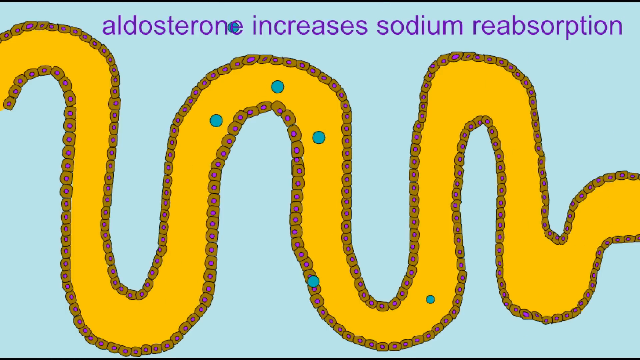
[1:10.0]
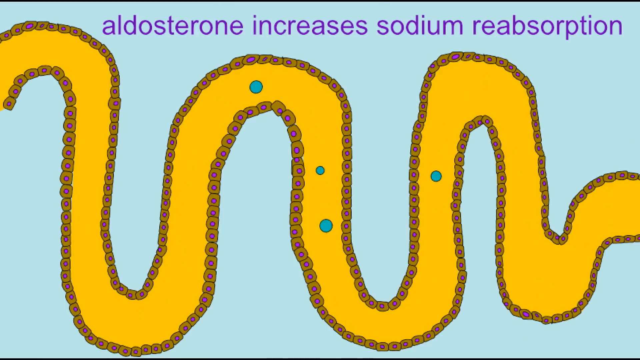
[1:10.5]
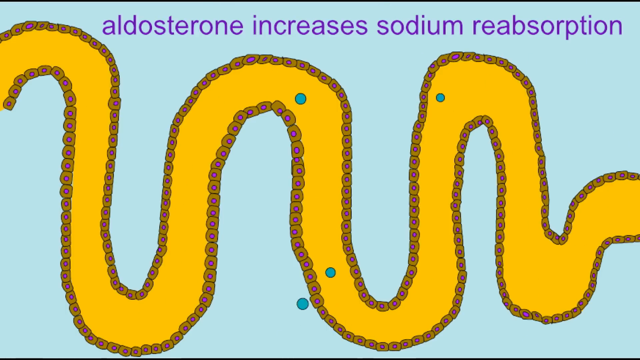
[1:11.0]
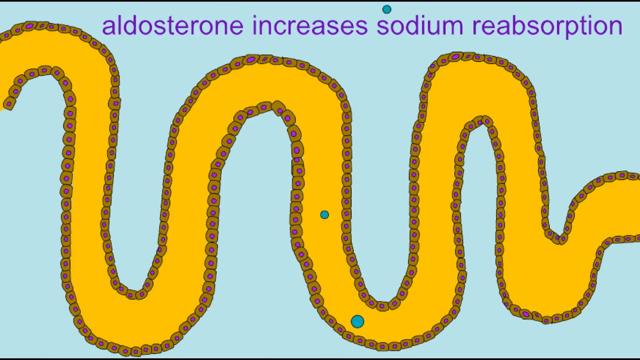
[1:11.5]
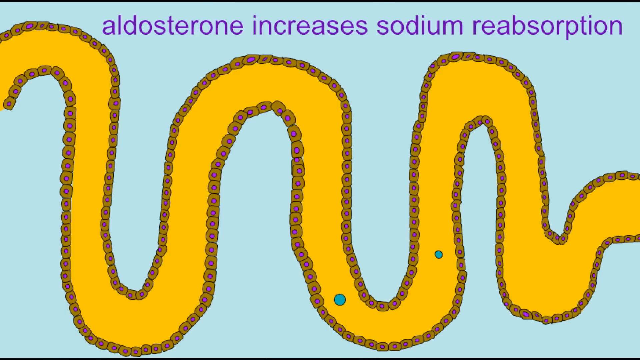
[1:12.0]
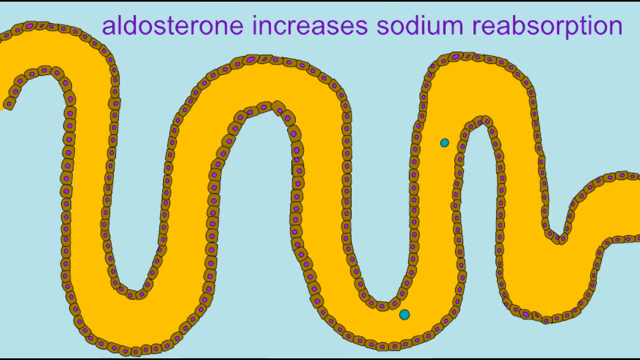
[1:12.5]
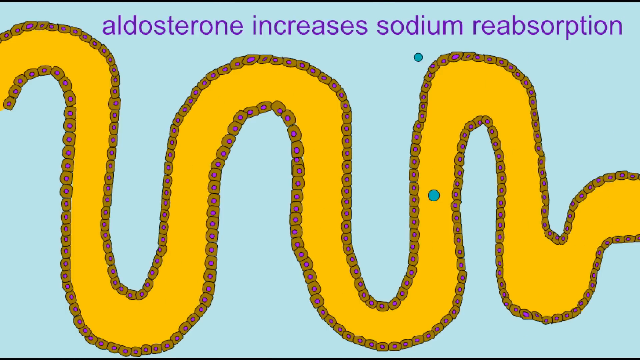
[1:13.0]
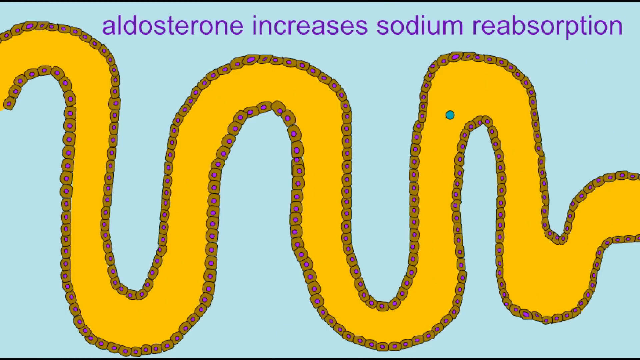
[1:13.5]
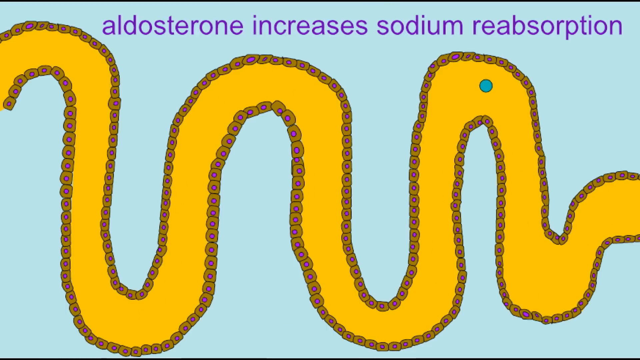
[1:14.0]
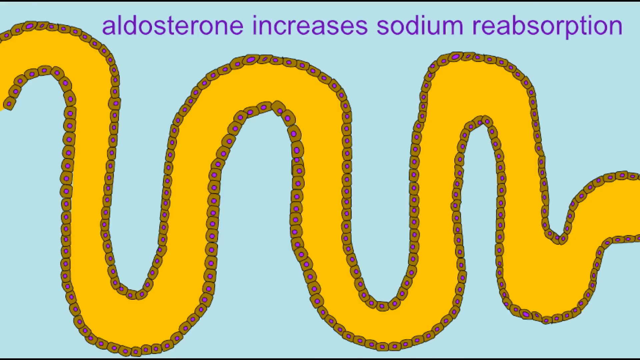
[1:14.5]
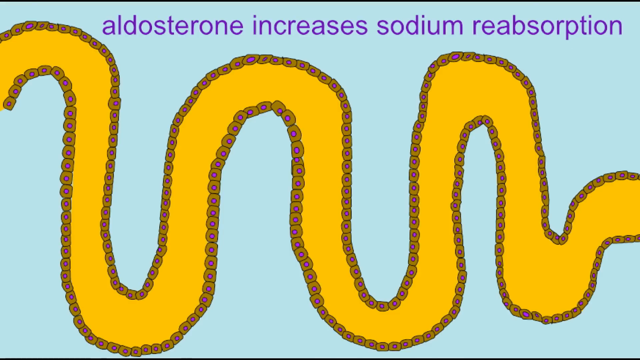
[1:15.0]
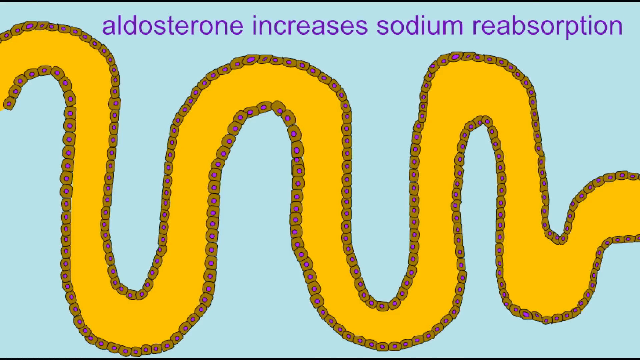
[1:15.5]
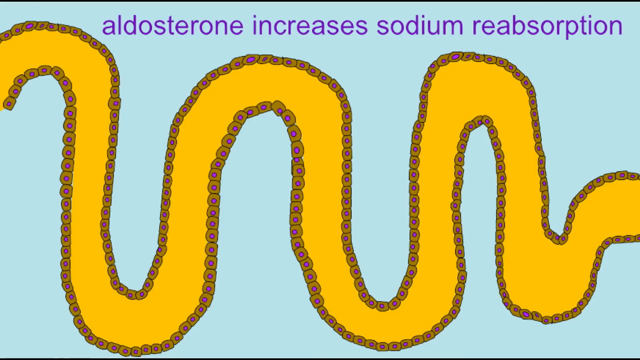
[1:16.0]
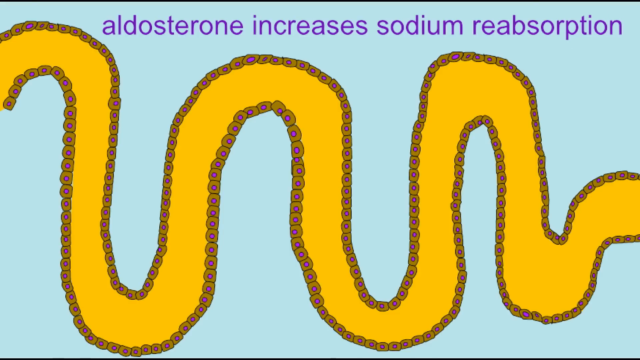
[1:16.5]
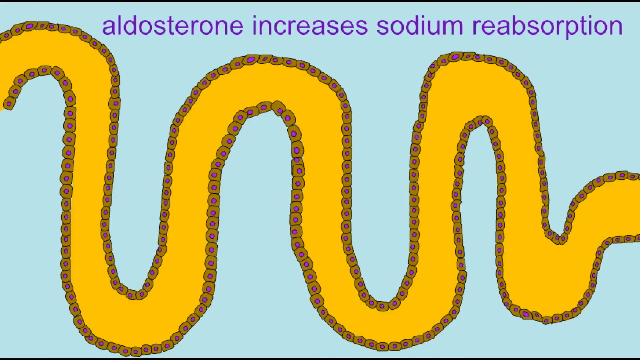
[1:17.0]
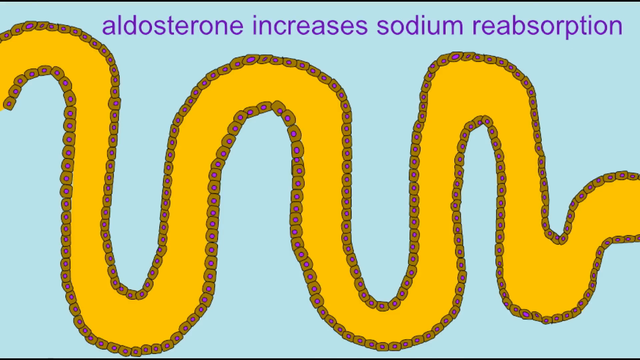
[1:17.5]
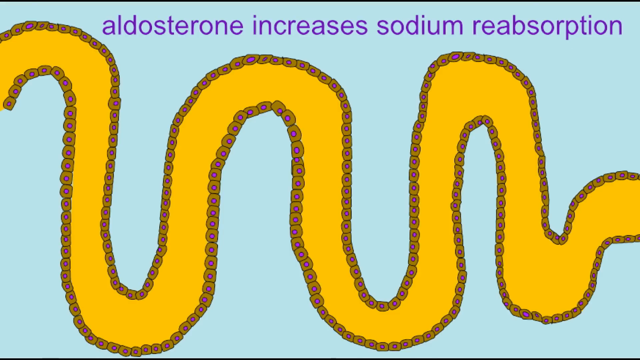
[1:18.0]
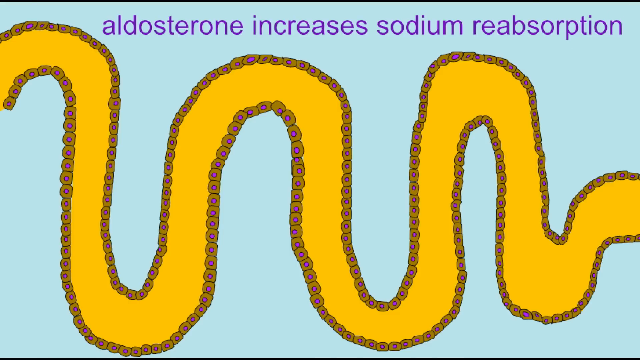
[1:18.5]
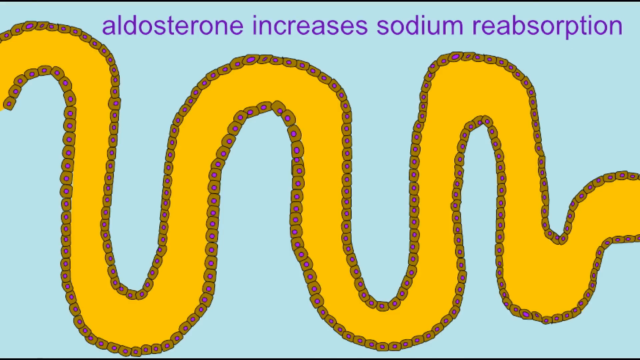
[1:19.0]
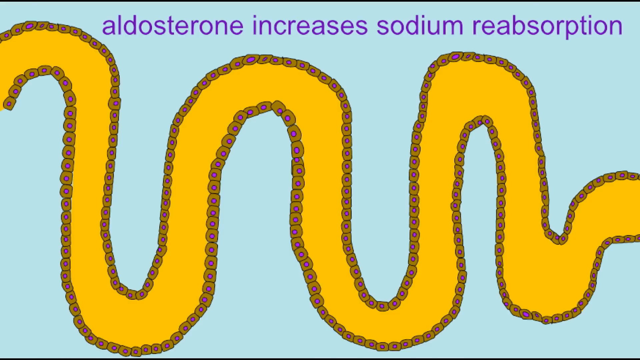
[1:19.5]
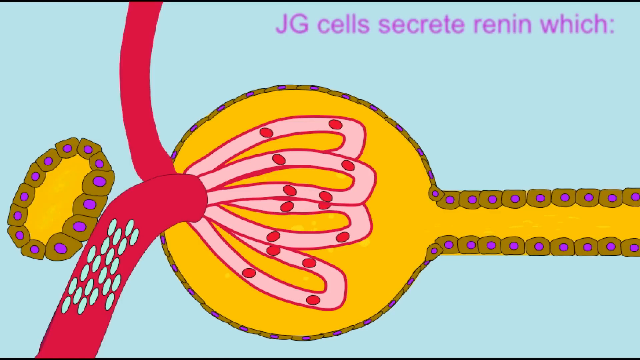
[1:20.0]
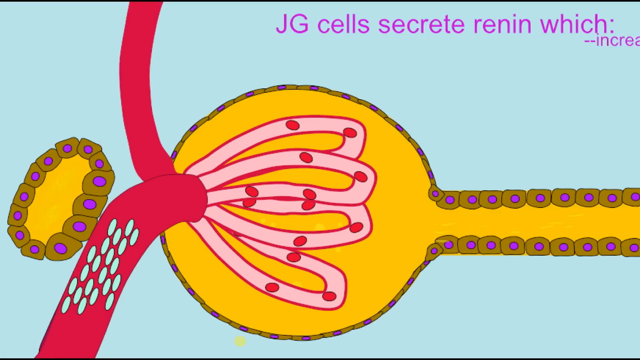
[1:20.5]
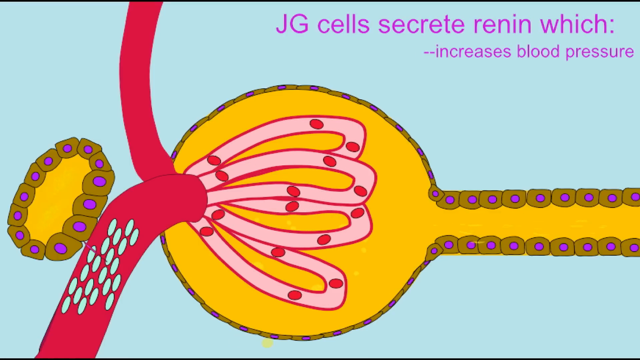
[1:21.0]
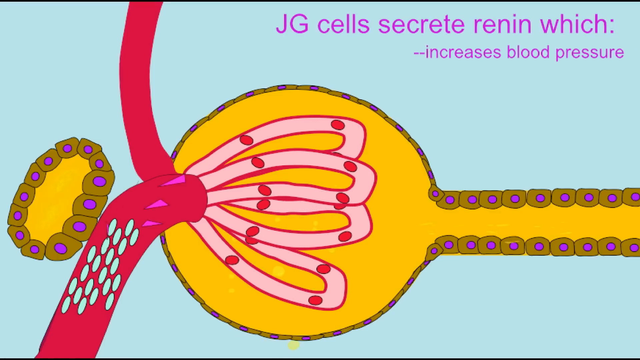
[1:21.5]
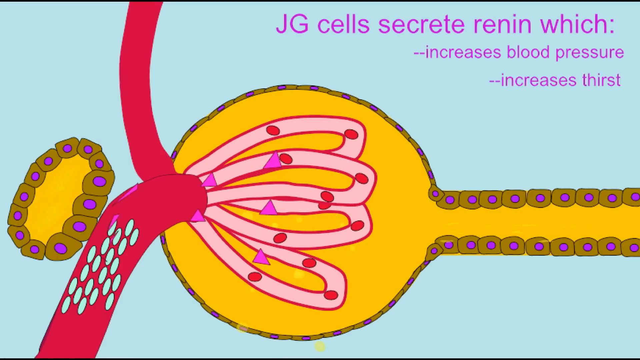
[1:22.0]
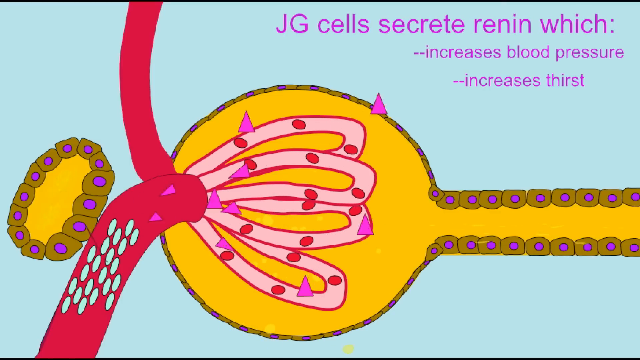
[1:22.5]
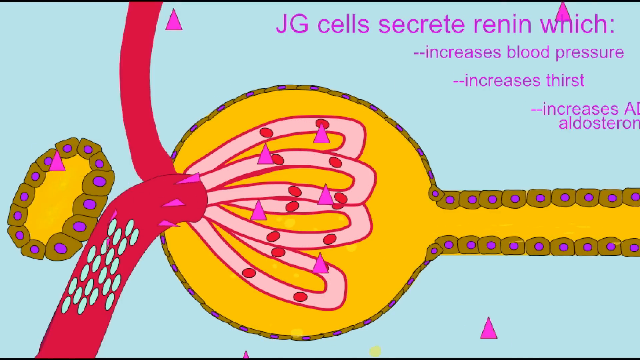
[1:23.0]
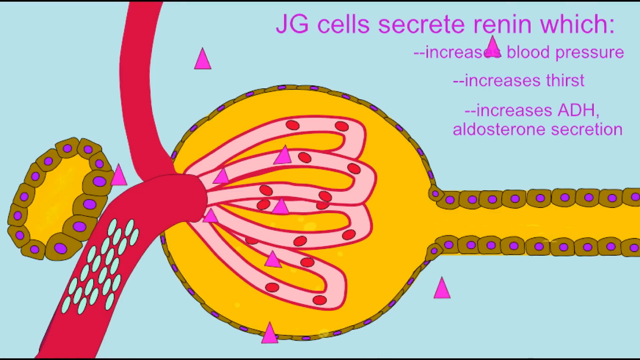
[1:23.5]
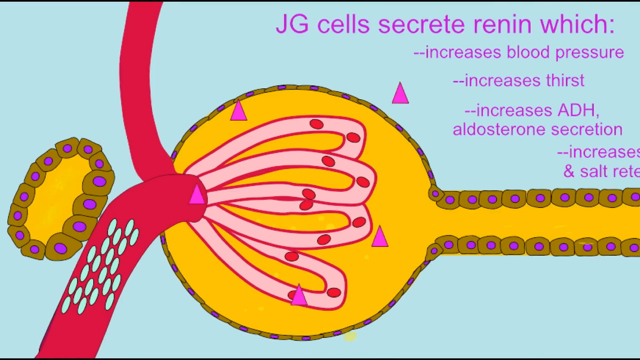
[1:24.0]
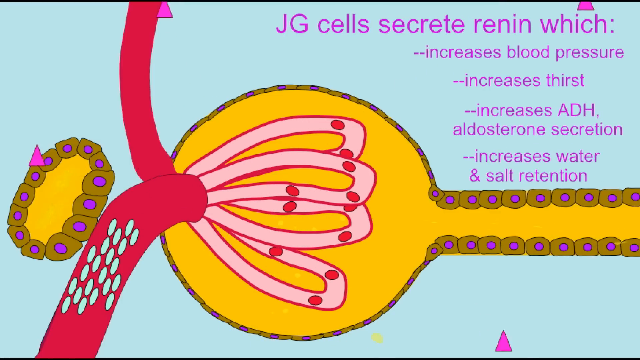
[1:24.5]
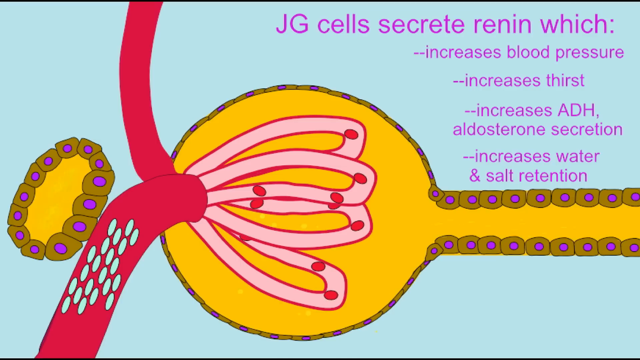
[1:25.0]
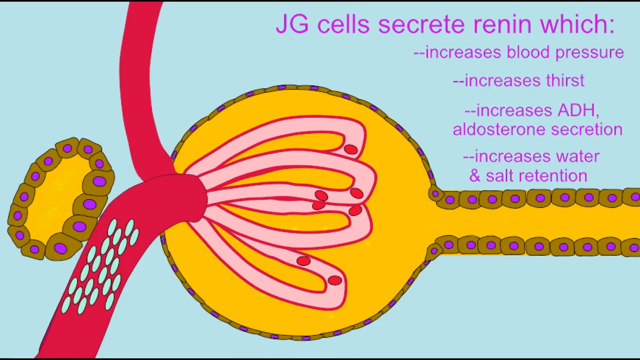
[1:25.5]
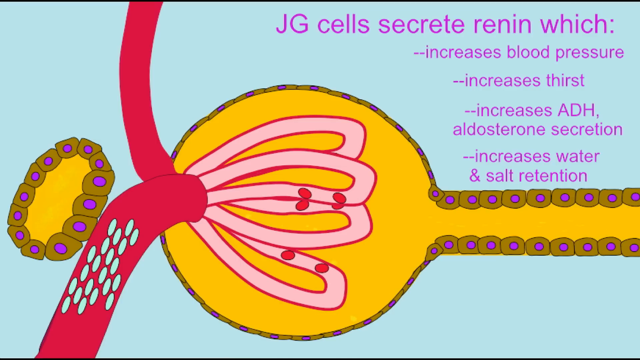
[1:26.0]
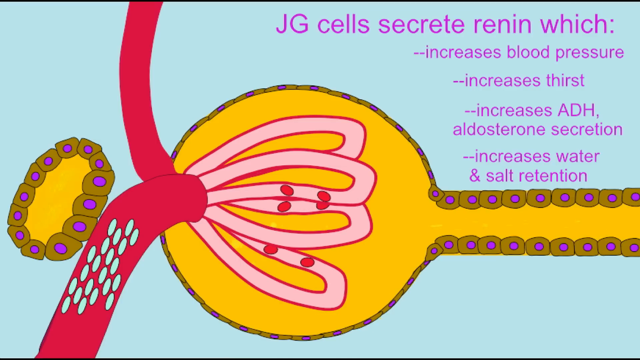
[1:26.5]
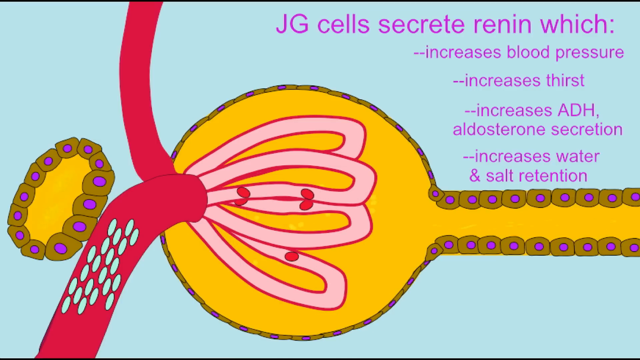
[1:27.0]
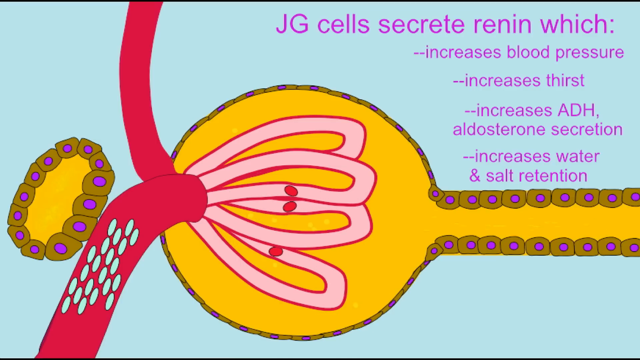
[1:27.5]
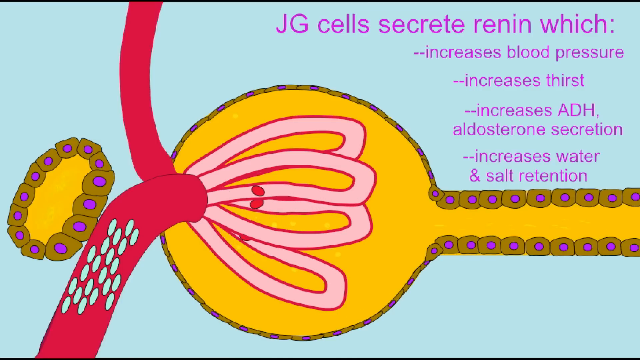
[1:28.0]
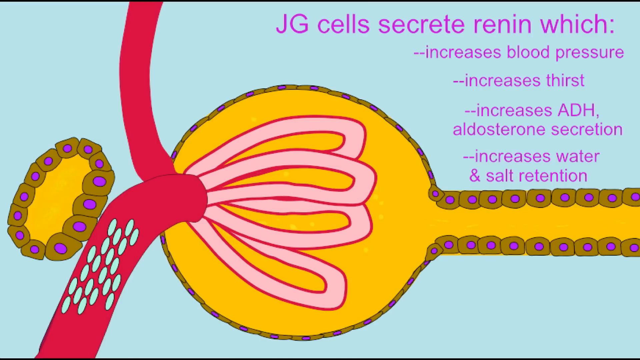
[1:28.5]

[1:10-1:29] The snake-like yellow object is back on screen, and blue dots continue to fall out of it. The screen is blue and the object is yellow, with red and purple text on top of it. The view returns to the original circular yellow object with the veins and red dots. Purple text at the top says "increases blood pressure, increases thirst, increases ADH secretions, and increases water and salt retention." The objects inside the blood vessel continue to move around. To the left is a yellow cell with a darker yellow, circular border and a purple dot in the middle. The blood vessel has blue oval dots on it as well. The object stays in the middle while the screen explains what is going on.